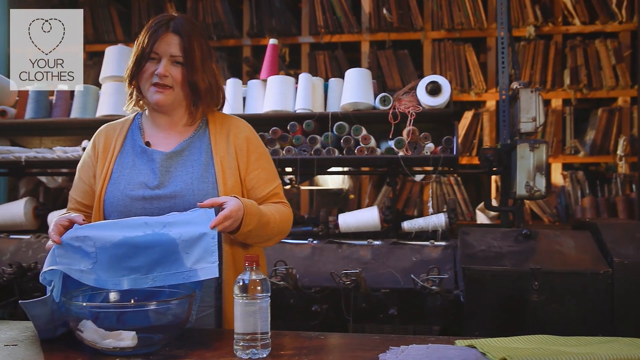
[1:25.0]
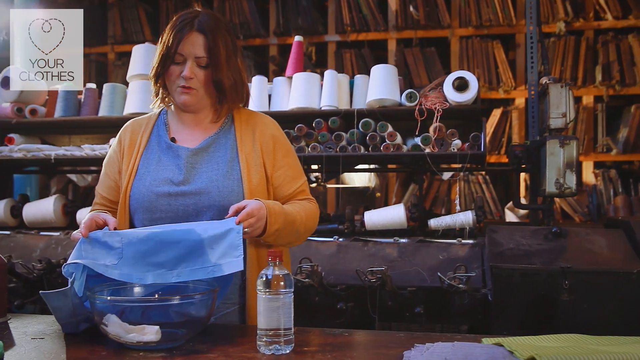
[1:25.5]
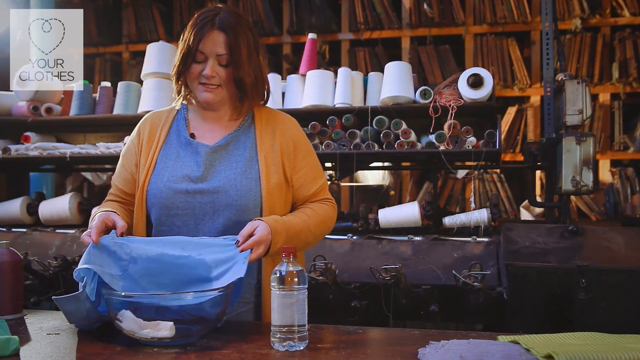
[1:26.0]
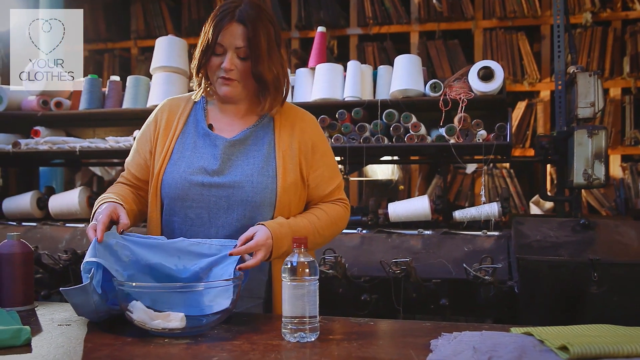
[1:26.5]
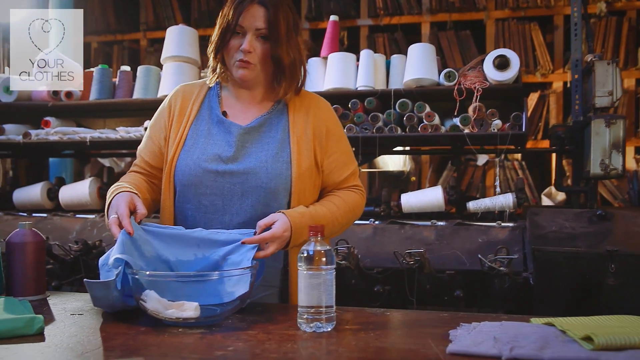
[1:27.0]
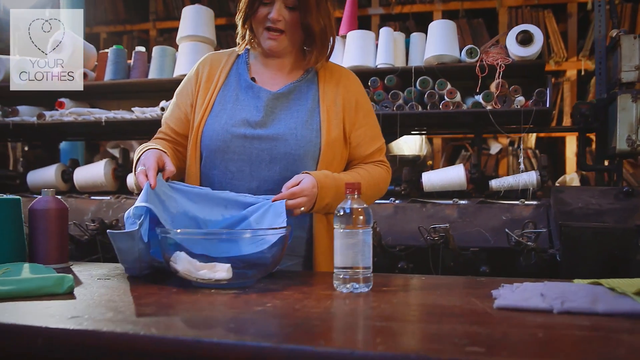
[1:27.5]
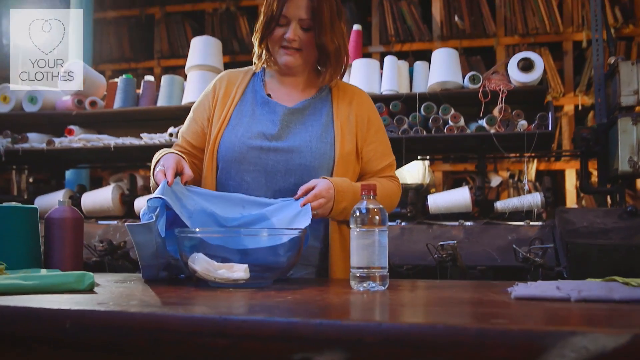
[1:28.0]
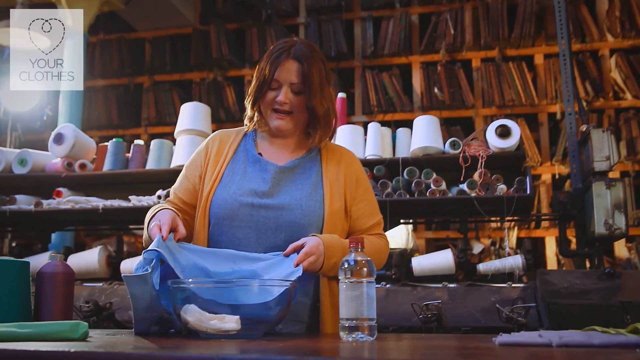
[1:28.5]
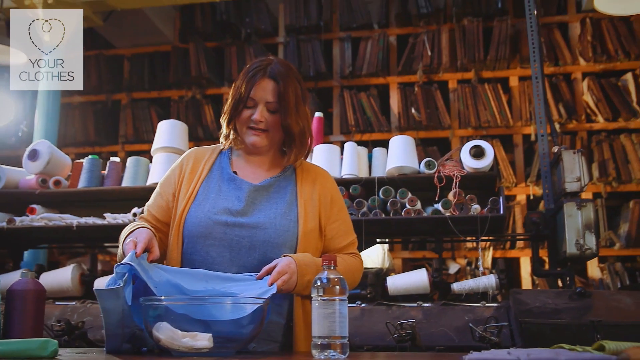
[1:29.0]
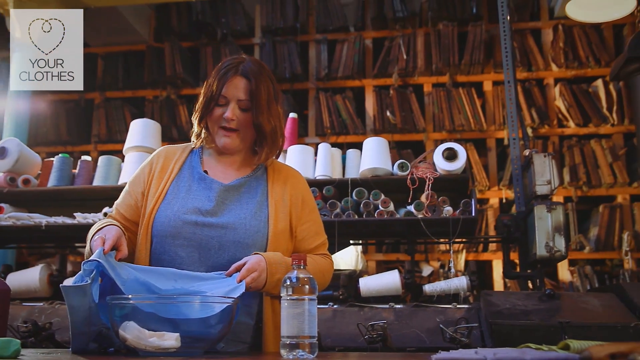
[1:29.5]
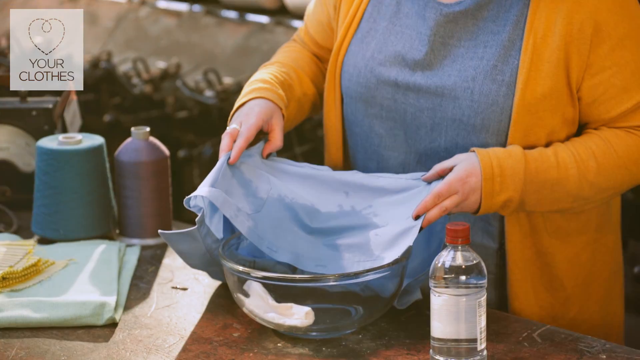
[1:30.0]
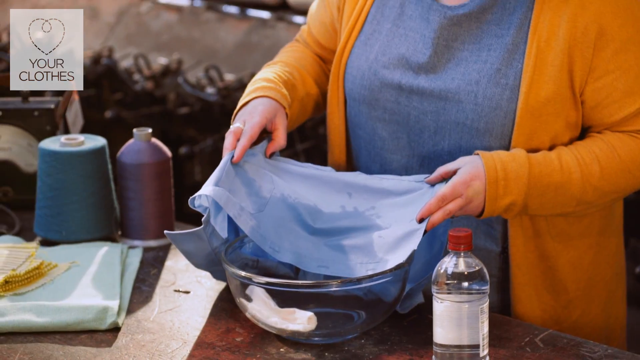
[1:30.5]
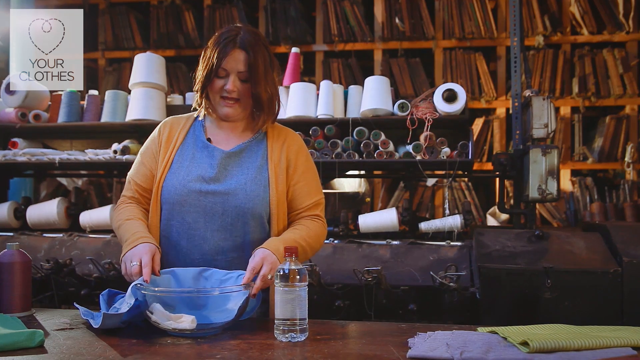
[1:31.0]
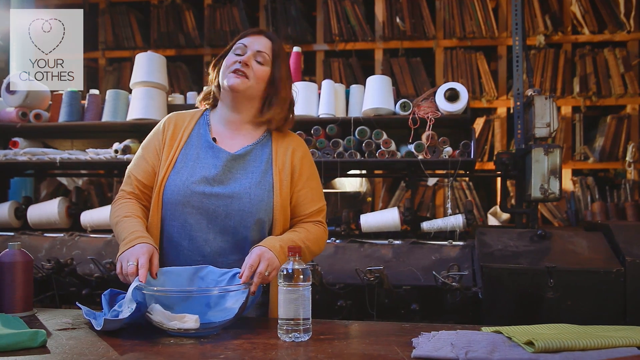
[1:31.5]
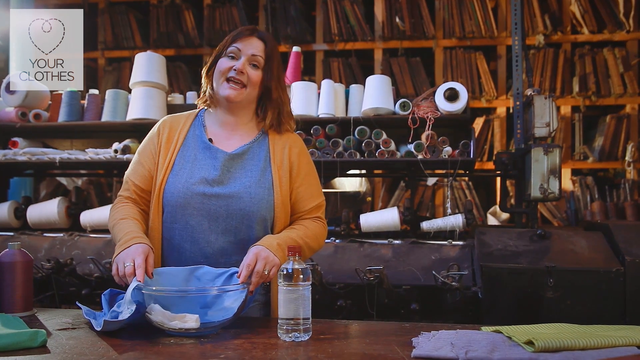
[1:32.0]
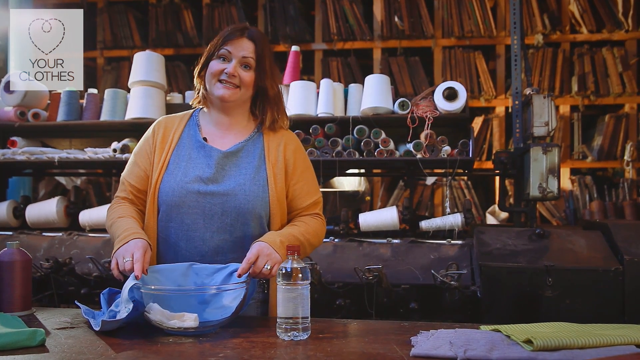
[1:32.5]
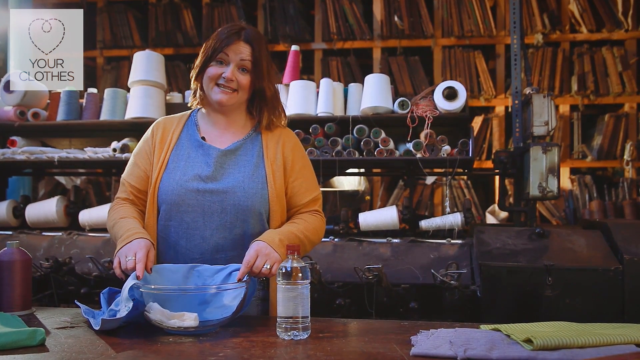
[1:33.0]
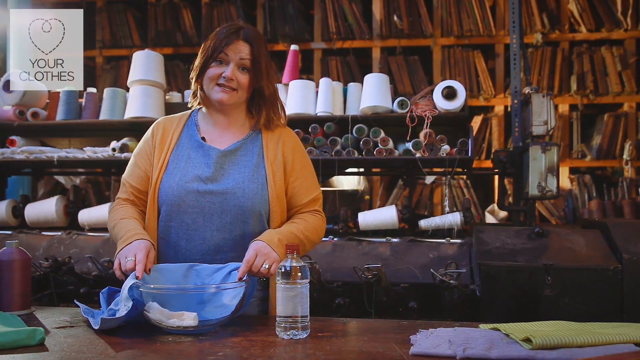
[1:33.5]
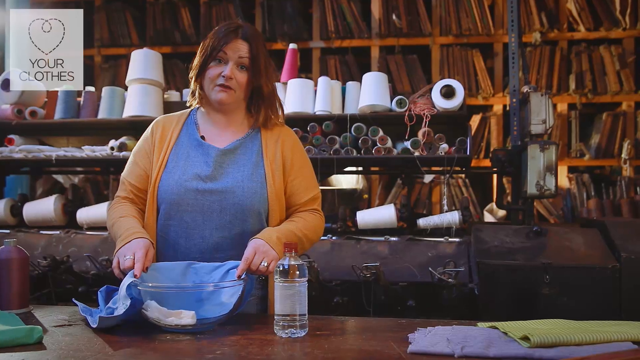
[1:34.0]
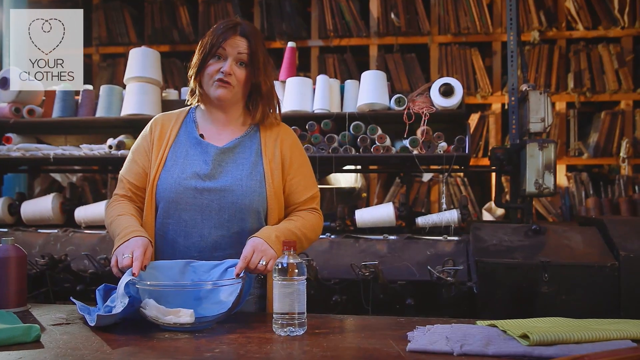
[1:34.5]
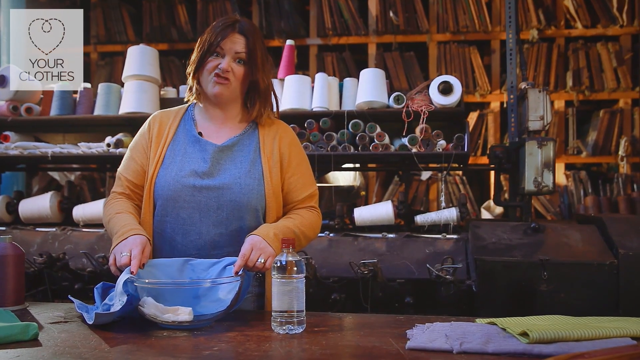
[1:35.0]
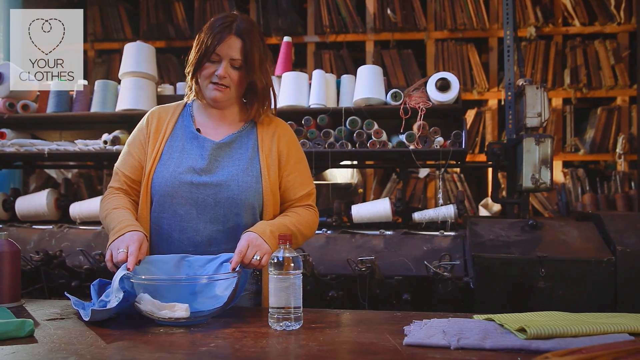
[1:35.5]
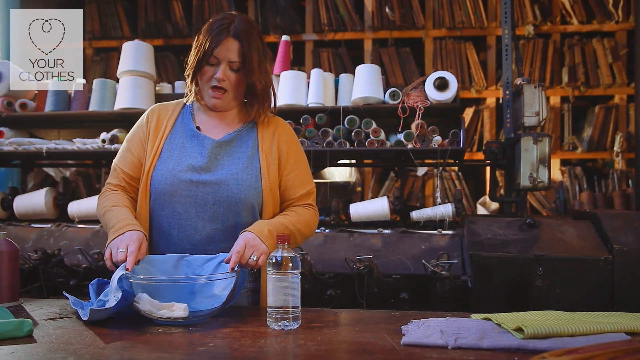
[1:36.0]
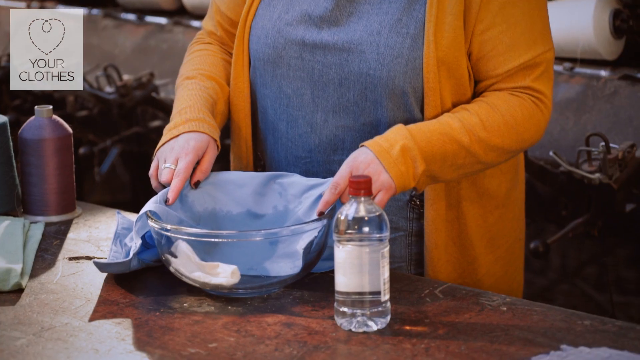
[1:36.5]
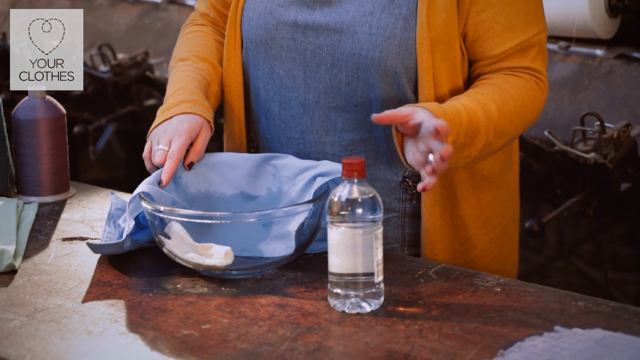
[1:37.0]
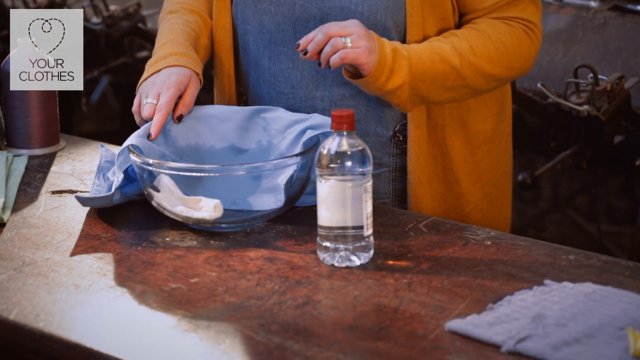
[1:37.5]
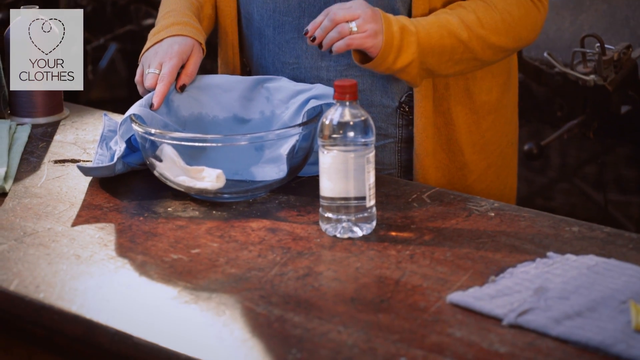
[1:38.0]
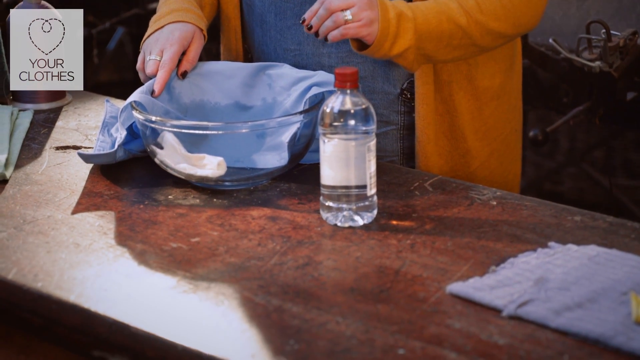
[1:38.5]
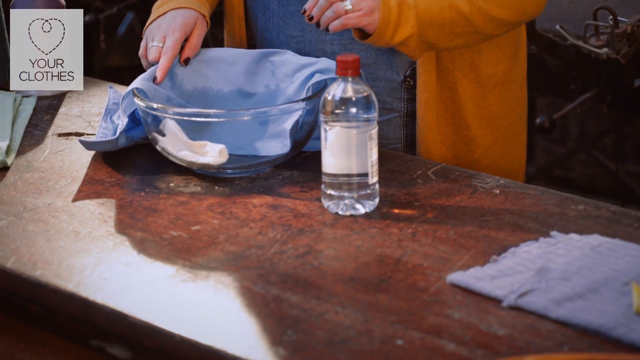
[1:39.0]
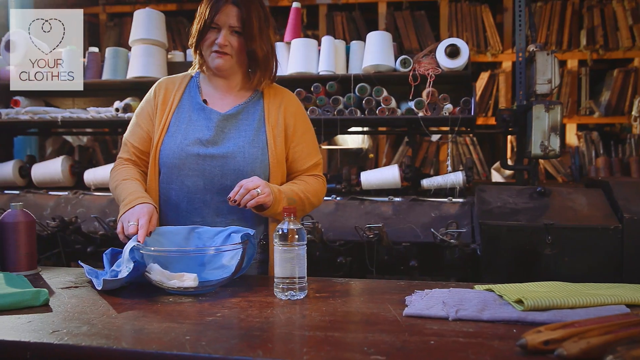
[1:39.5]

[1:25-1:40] A woman talks toward the camera about what appears to be stain removal from a piece of clothing. She holds up a blue dress shirt that has had liquid poured on it; the saturated area is deeper in color. In the upper left-hand corner is a tag or logo with a stitched outlined heart and "Your Clothes" underneath, possibly for the channel the video is posted on. The shirt is in a glass bowl with a white cloth. Spread across the table are spools of material and some loose material in green and purple. There is a clear bottle of some type of cleaning solution or liquid with no label. Behind the woman are more spools of yarn and material, making the place look more like a workshop than a textile store or shop.